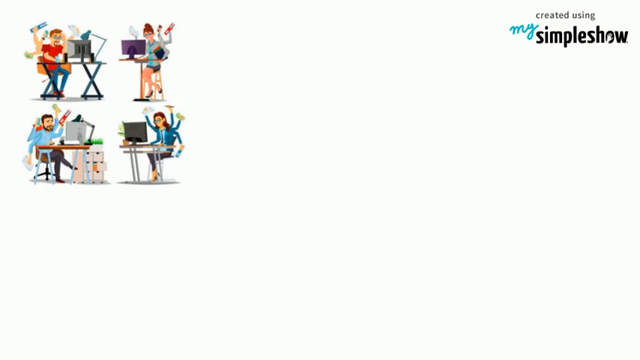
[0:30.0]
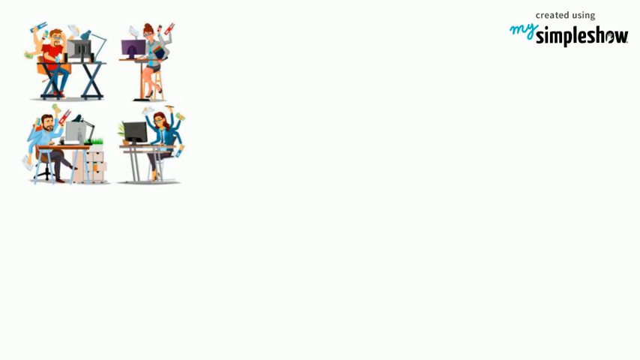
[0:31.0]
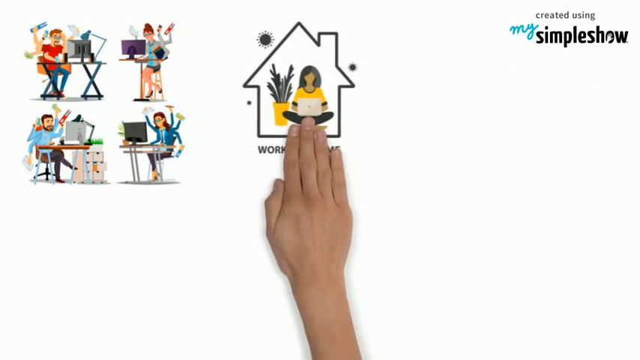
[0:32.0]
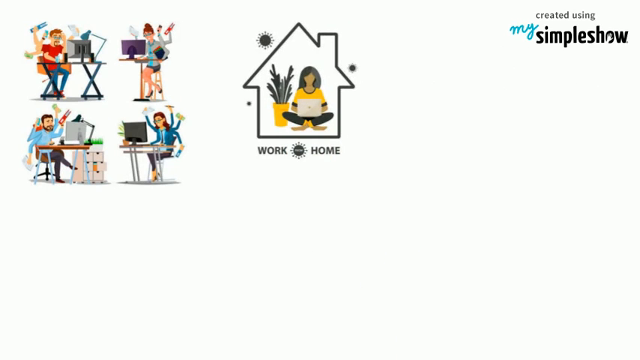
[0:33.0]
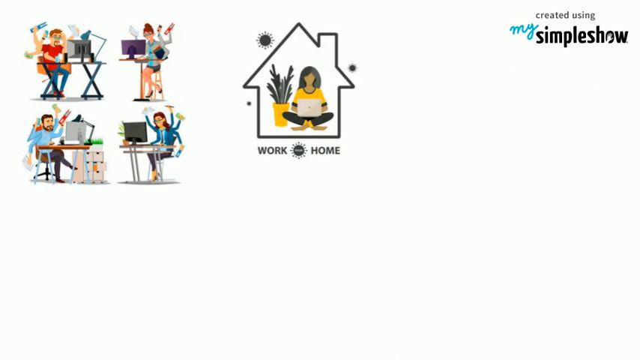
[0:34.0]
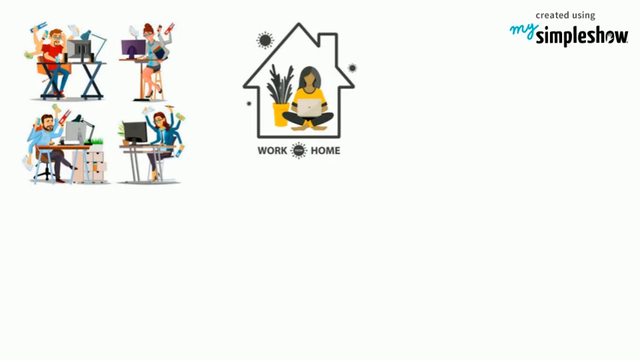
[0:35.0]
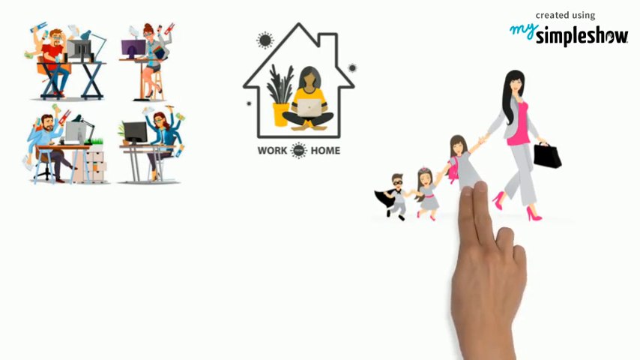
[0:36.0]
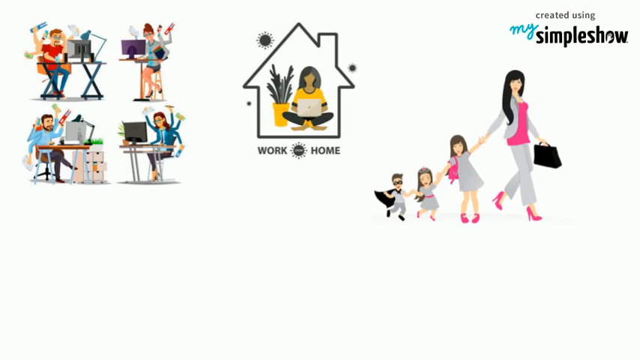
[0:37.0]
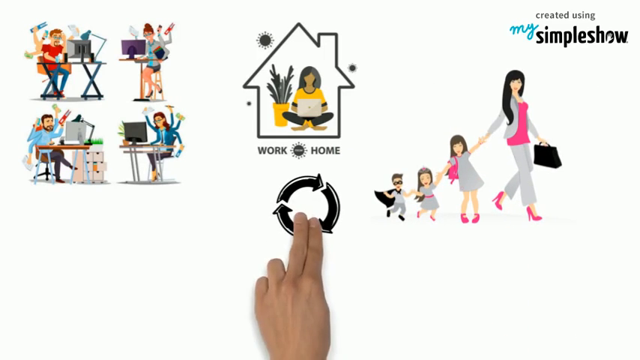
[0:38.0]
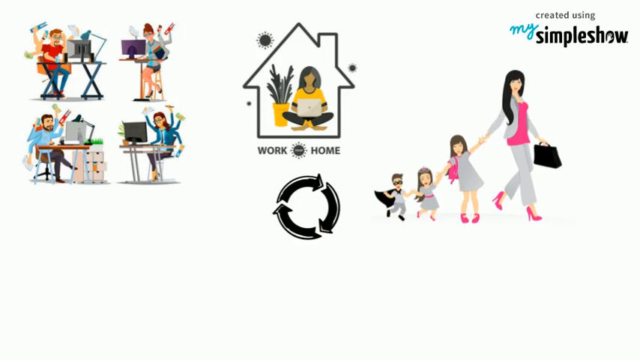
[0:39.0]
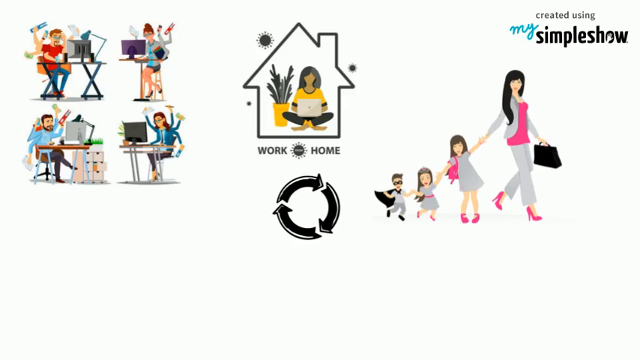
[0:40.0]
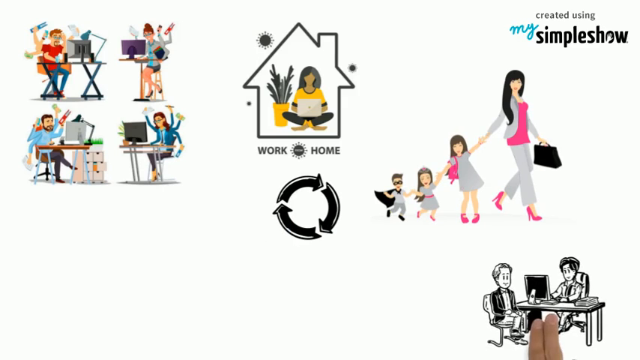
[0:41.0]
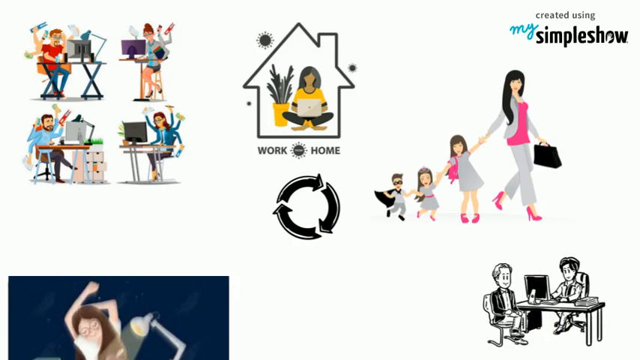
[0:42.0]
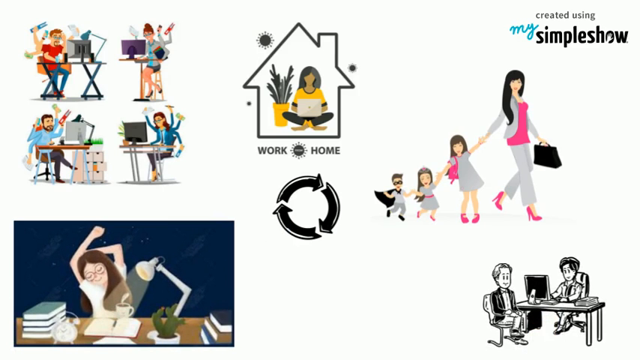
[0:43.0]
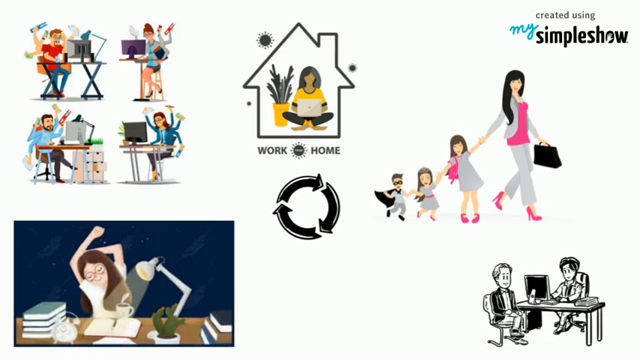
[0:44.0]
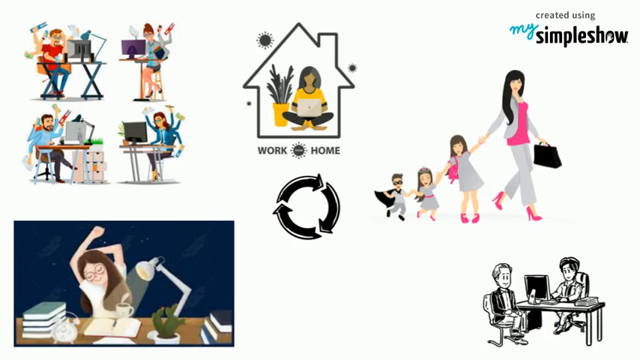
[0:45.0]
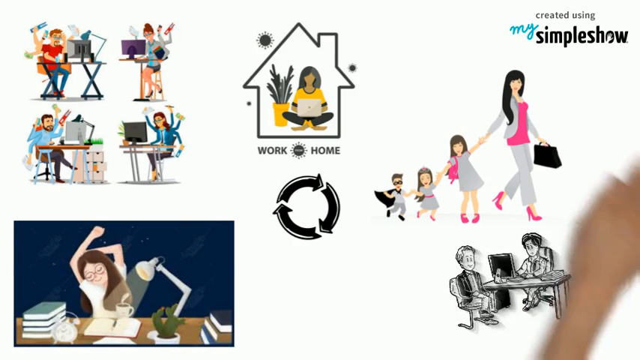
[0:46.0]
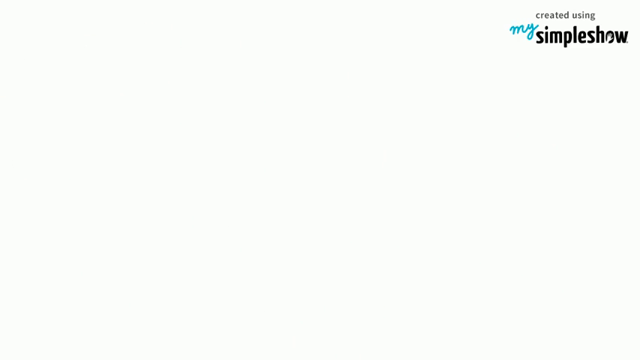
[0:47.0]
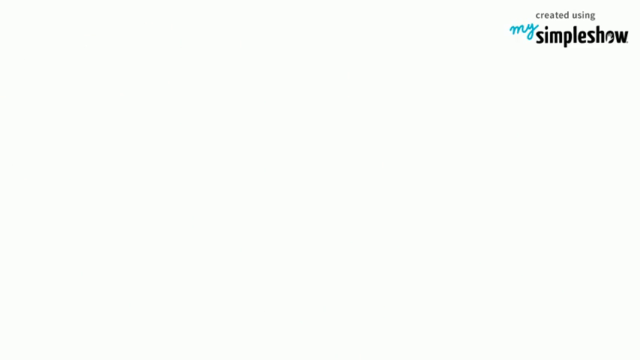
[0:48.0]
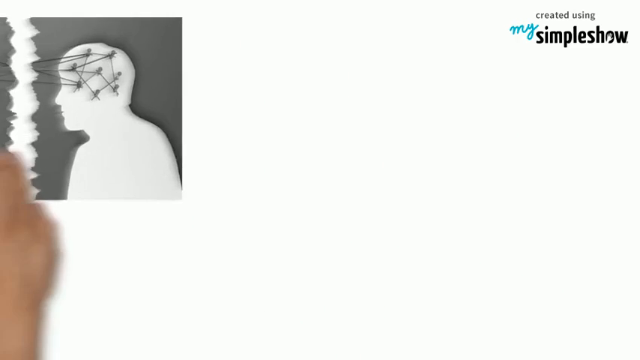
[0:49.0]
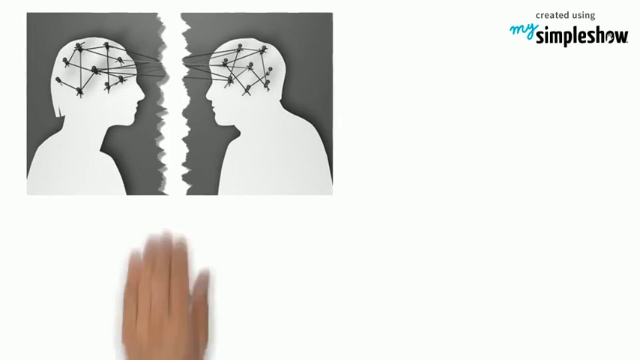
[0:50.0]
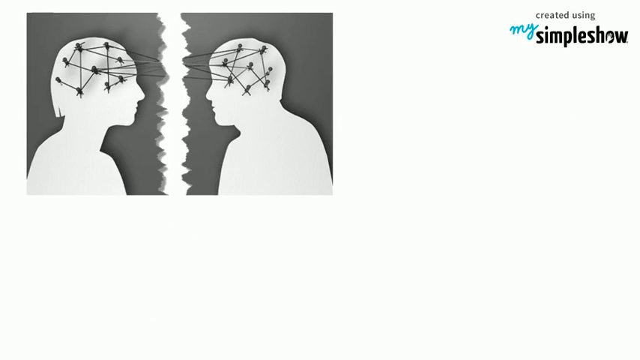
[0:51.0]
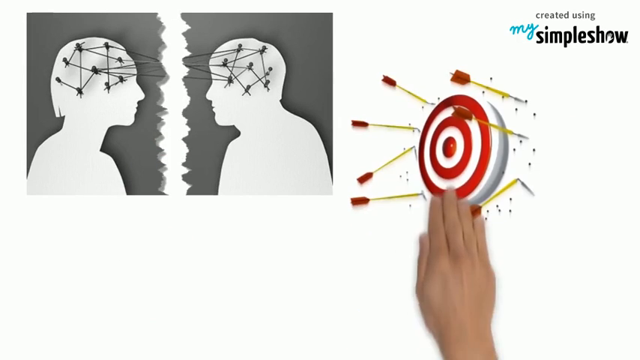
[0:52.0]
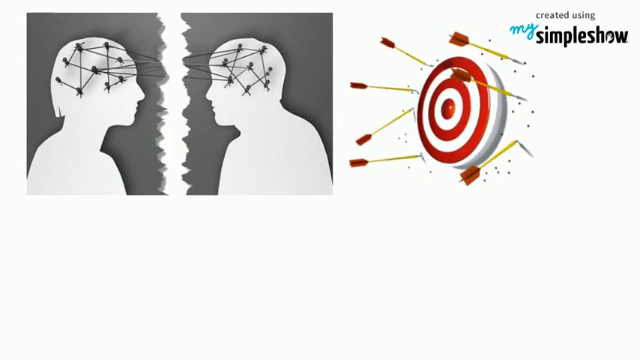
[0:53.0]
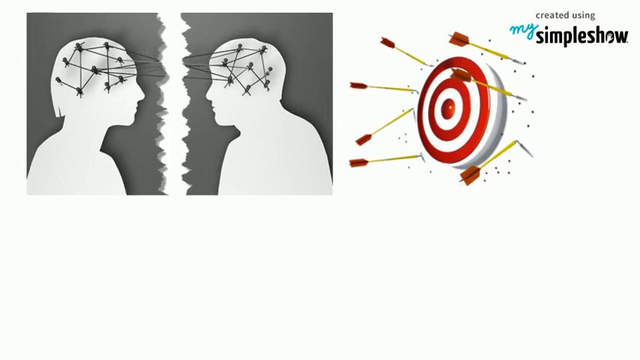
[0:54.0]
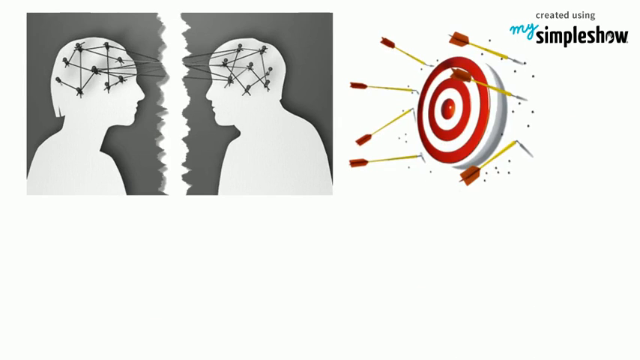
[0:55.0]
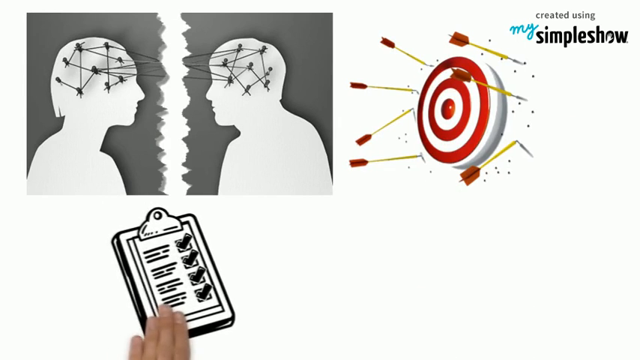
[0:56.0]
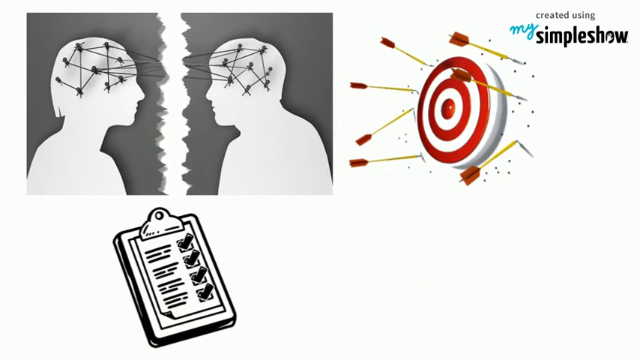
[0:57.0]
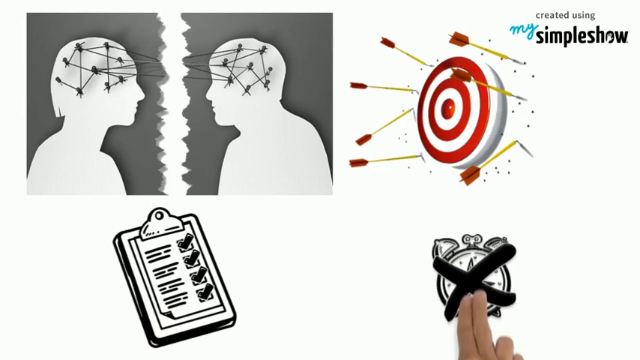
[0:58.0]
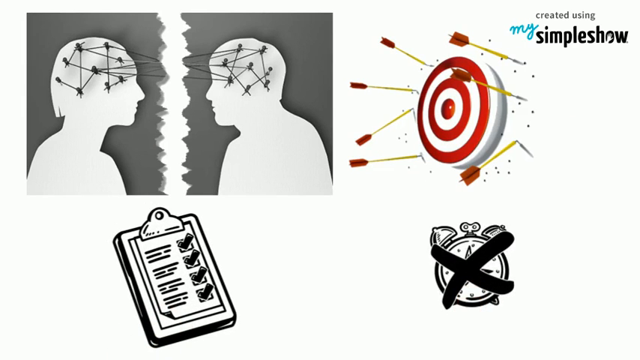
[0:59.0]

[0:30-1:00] At the left and top of the frame, four figures sit in front of a computer, displaying different emotions: excitement, stress and multitasking. The video was created using My Simple Show. After the four figures at the computer, a finger displays something that looks like a woman sitting with a flower beside her in a building, with the inscription "walk home" below. The finger then points out a woman wearing a light grey suit with a pink blouse and matching pink shoes, holding a black bag. Behind her are figures that seem to be children, two girls and a boy, also wearing light grey and black like the woman. Next, a finger points out arrows moving in a circular direction. Then two men sit behind a desk. A picture of two figures shows something that looks like a network with targets and arrows stuck into something that looks like a dart board. Finally, something that seems to be a stop clock appears.